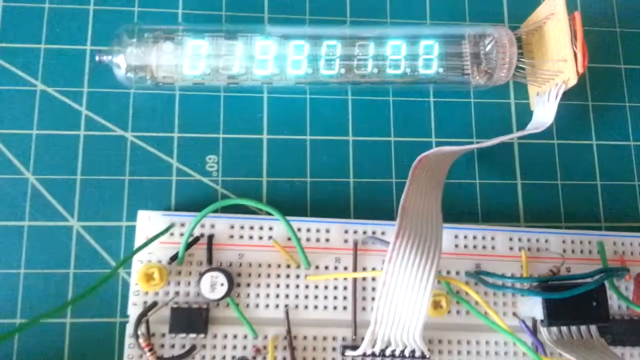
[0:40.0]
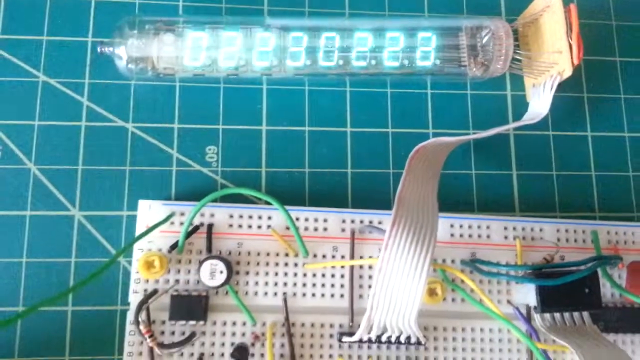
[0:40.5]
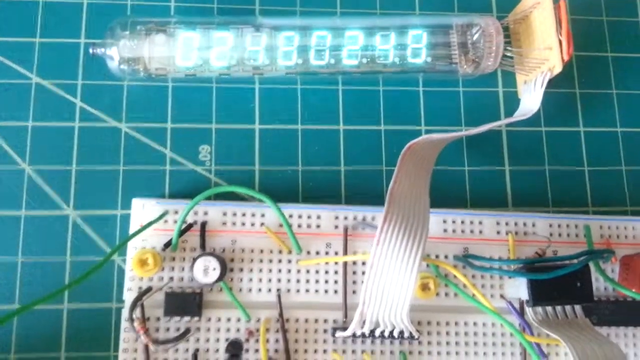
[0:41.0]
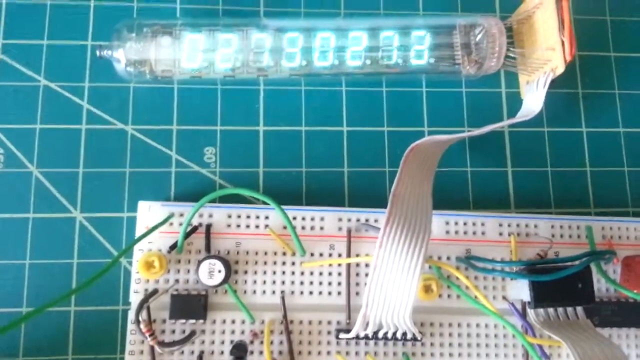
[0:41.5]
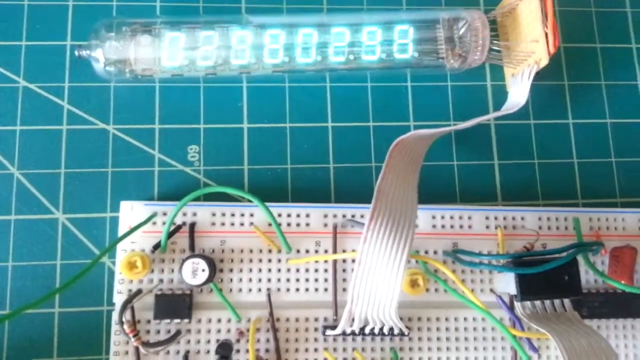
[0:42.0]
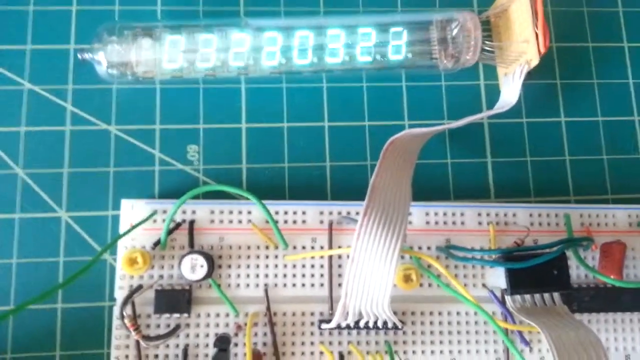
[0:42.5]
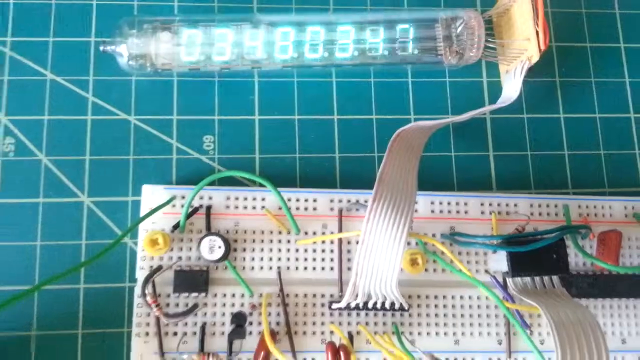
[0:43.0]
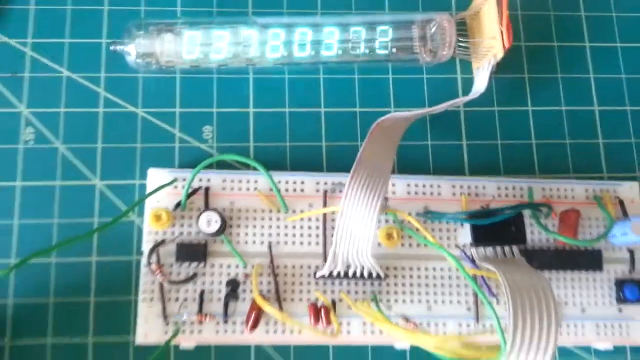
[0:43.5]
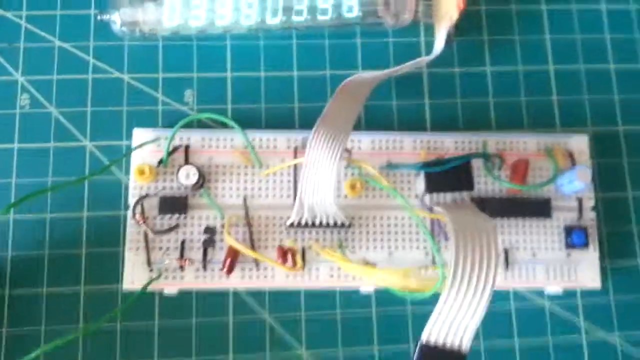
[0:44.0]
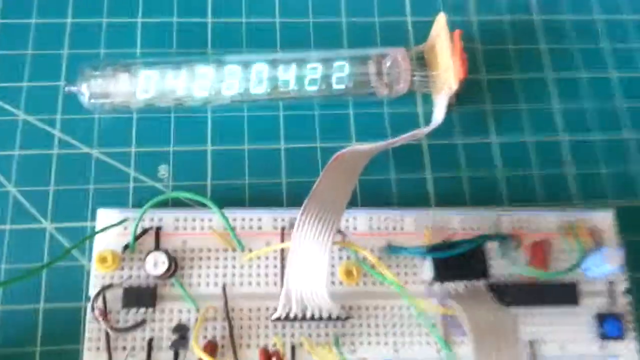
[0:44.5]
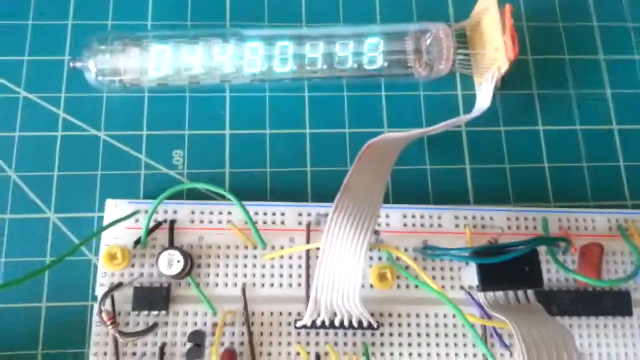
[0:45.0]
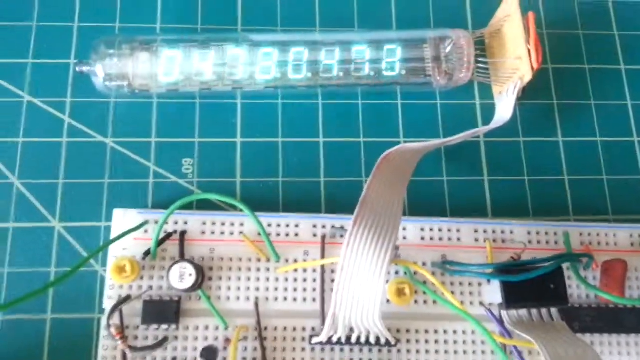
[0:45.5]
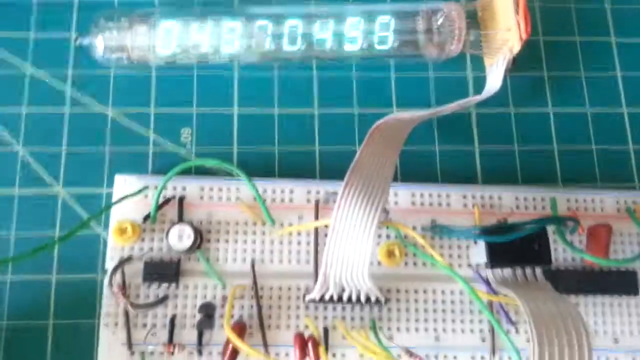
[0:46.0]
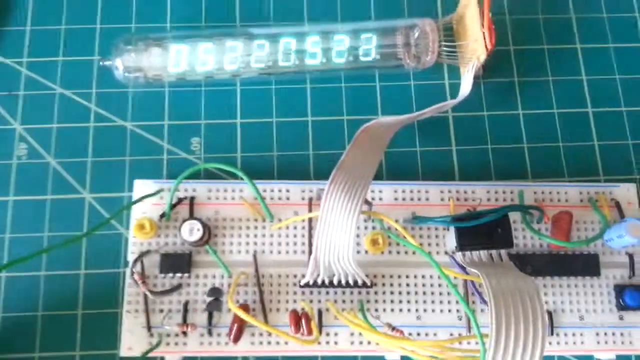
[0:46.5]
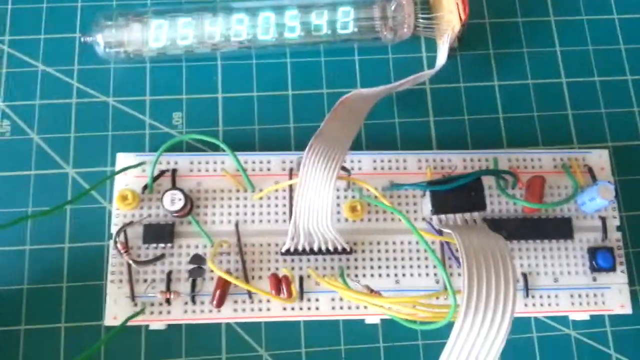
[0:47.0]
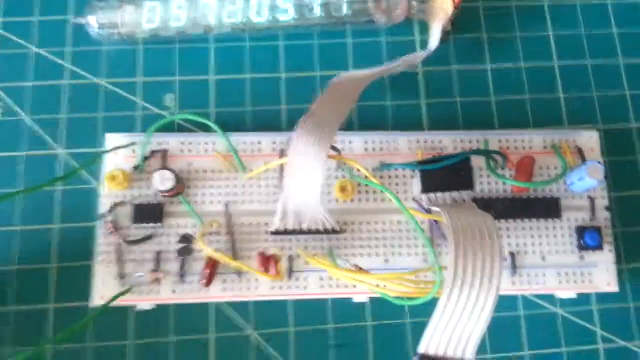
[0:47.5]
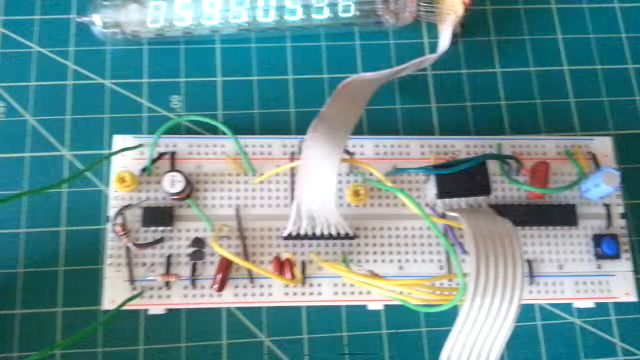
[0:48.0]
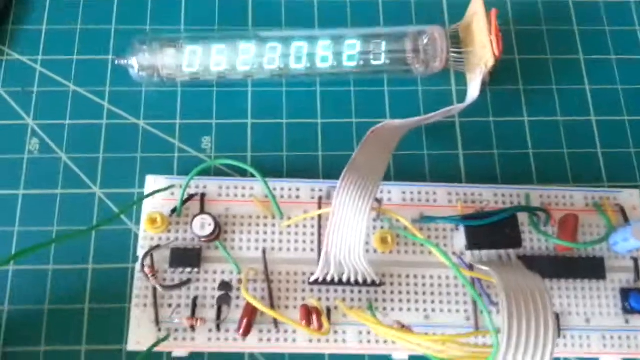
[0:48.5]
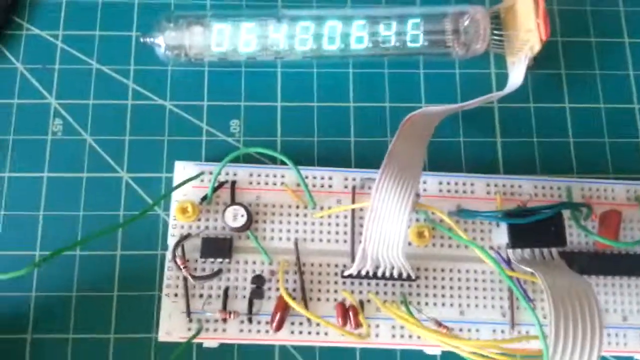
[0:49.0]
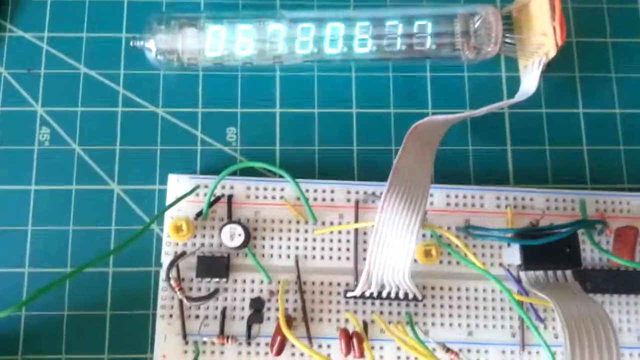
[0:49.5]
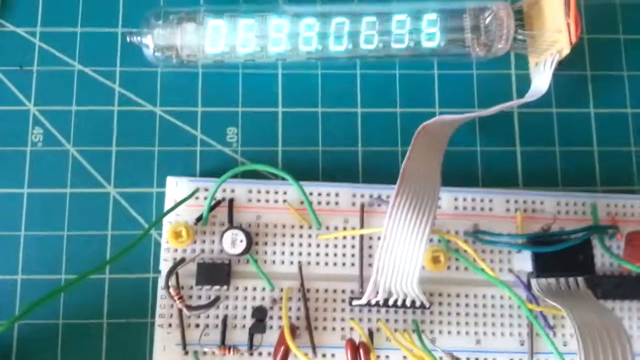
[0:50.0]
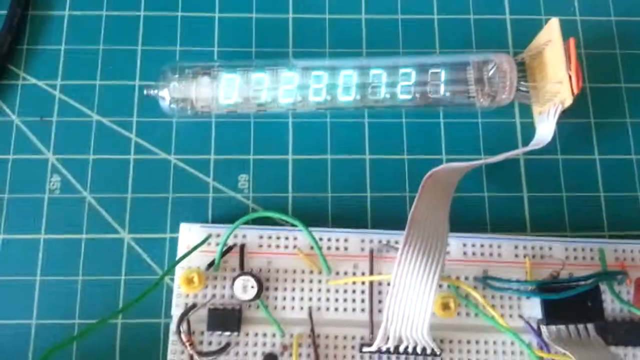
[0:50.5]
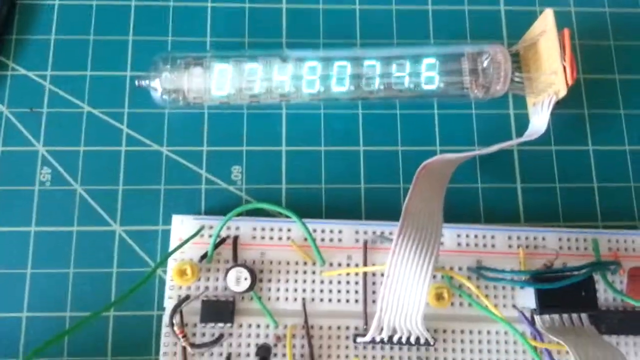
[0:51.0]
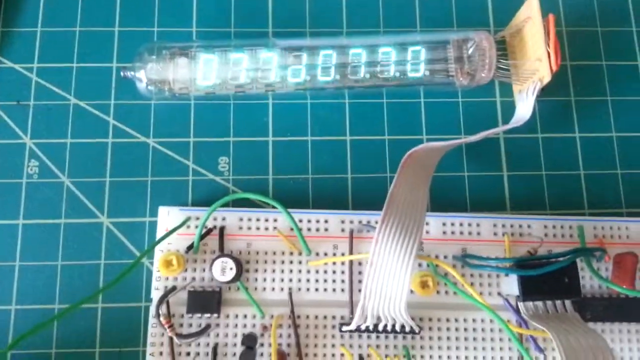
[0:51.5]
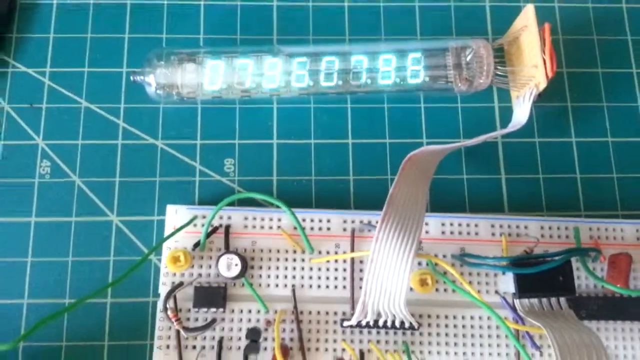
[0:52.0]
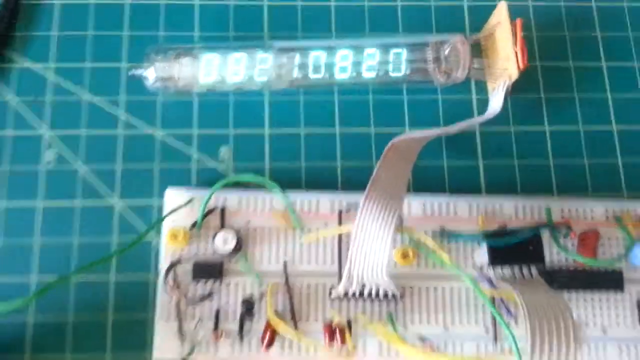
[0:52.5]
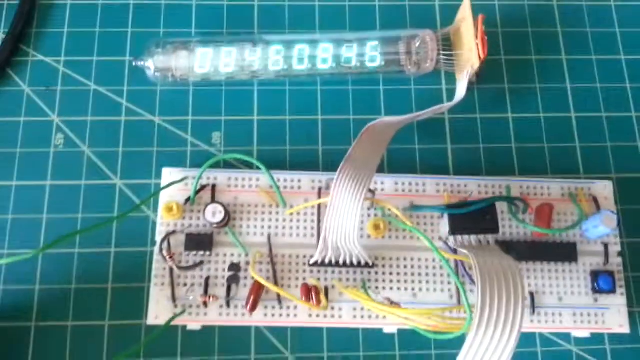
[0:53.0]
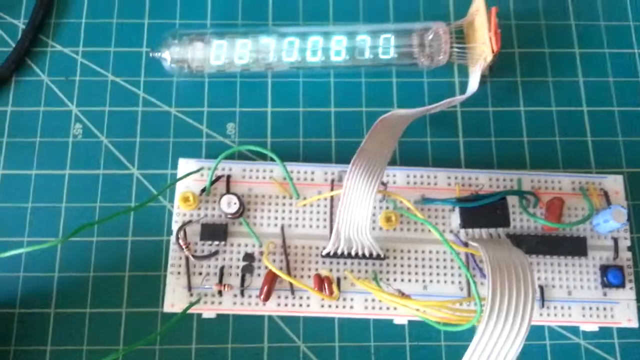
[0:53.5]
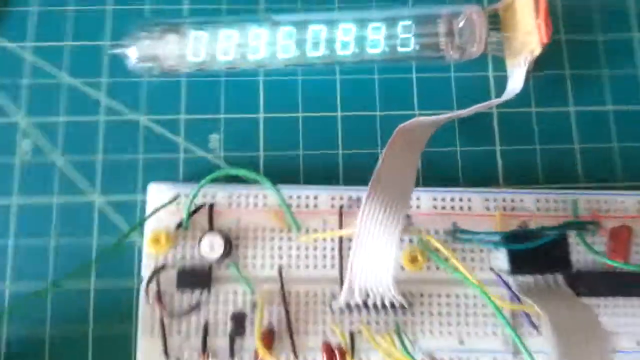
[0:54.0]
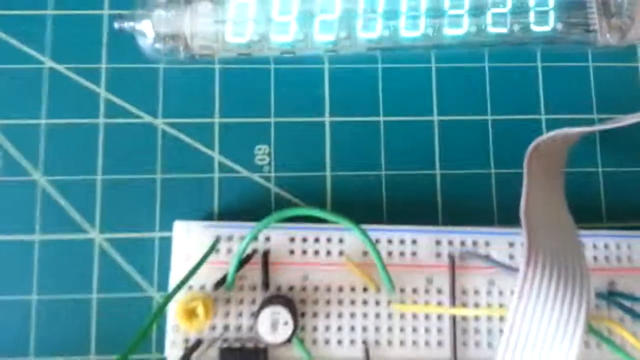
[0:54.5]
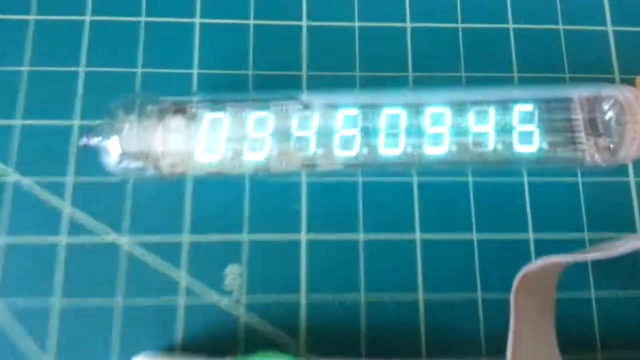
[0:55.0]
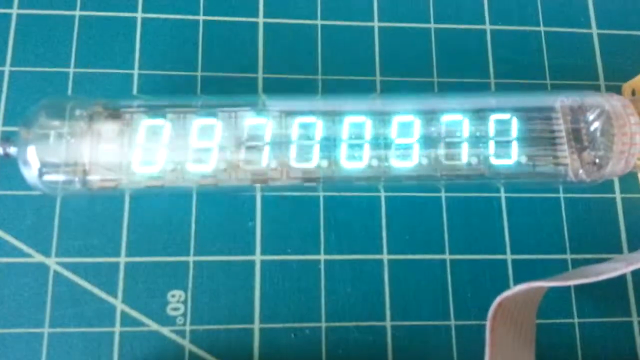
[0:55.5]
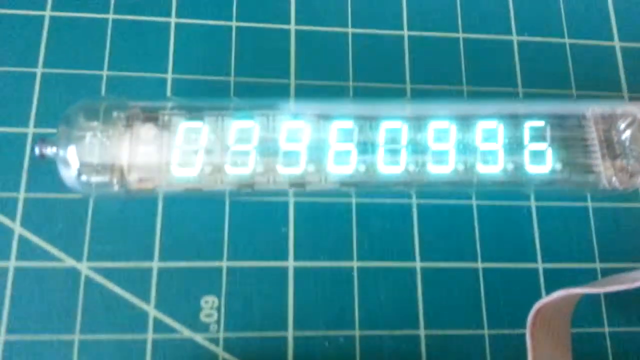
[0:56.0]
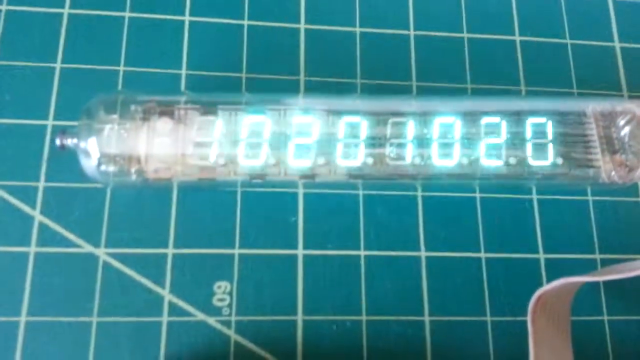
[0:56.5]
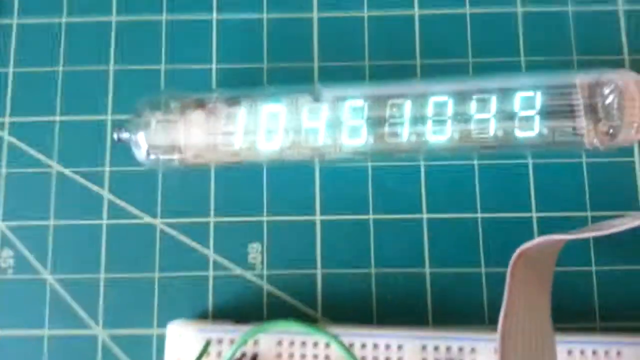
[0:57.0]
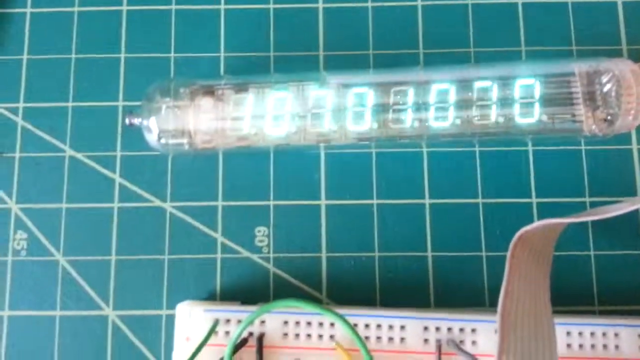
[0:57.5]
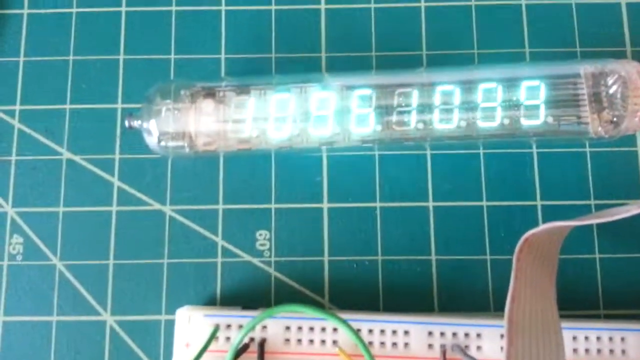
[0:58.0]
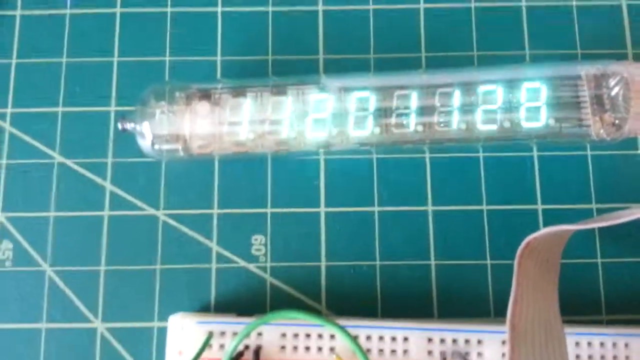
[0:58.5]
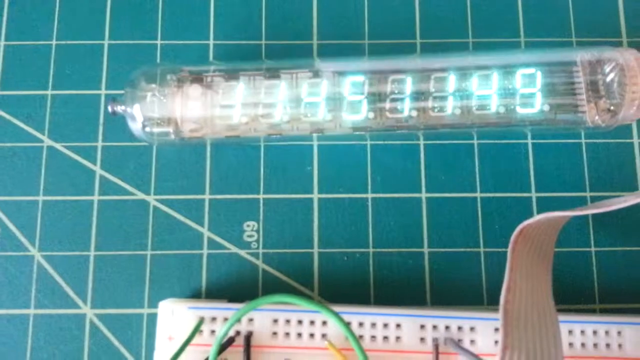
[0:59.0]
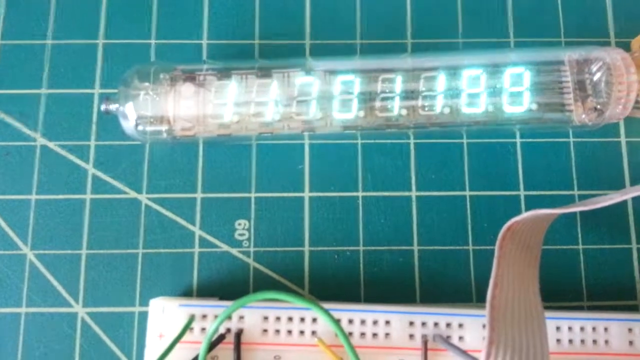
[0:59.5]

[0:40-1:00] The glass tube with the LEDs inside seems to keep fluctuating between values rather than staying constant. The user brings the camera close, emphasizing the number, which seems to fluctuate between about 20 and 100 or 200. Because the LEDs are very bright, it is hard to tell whether there is a decimal point.